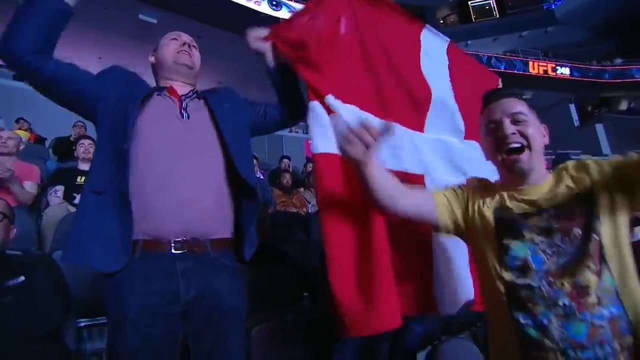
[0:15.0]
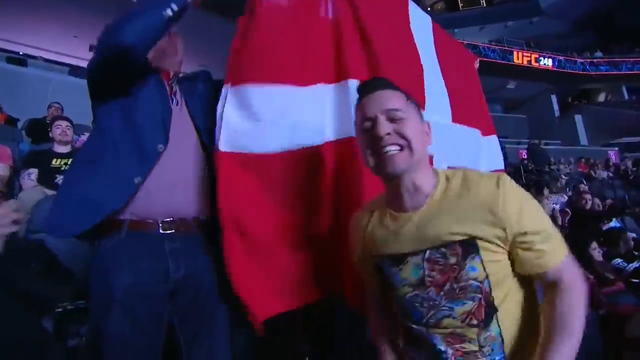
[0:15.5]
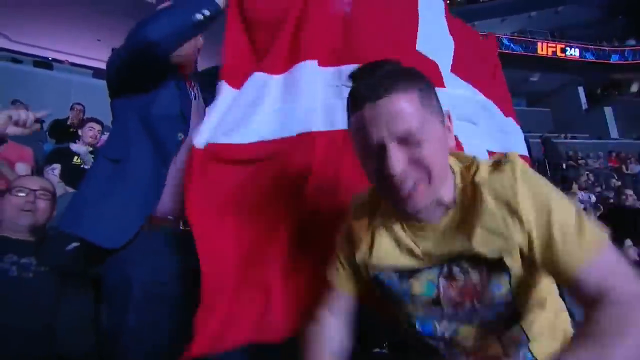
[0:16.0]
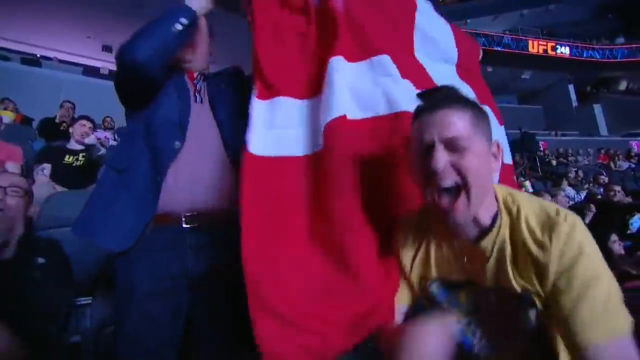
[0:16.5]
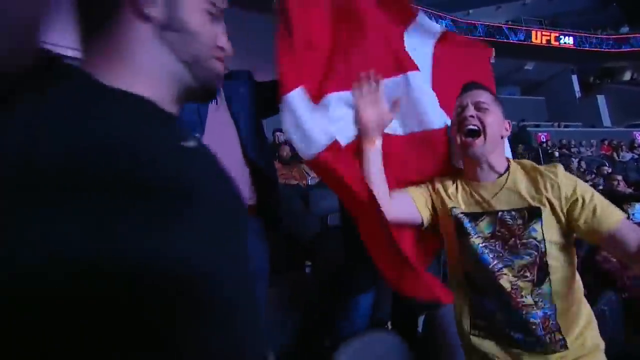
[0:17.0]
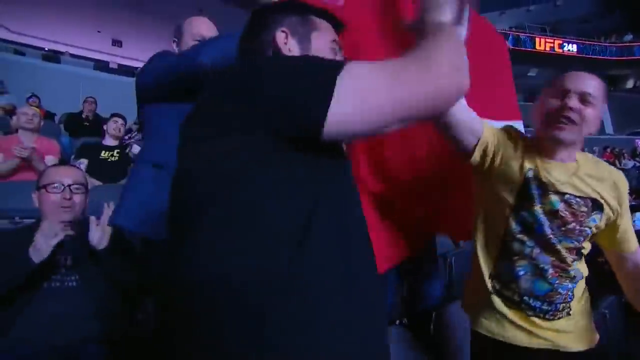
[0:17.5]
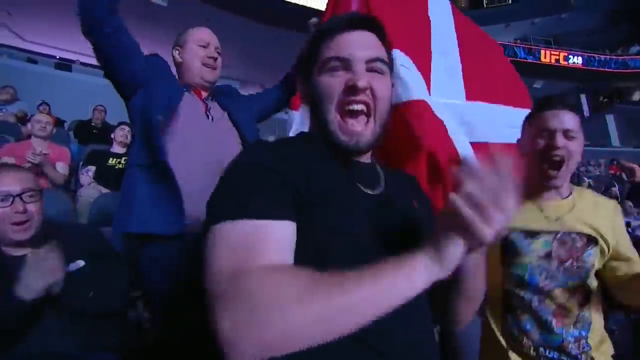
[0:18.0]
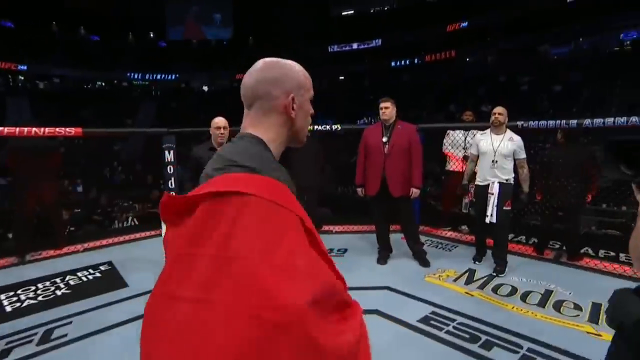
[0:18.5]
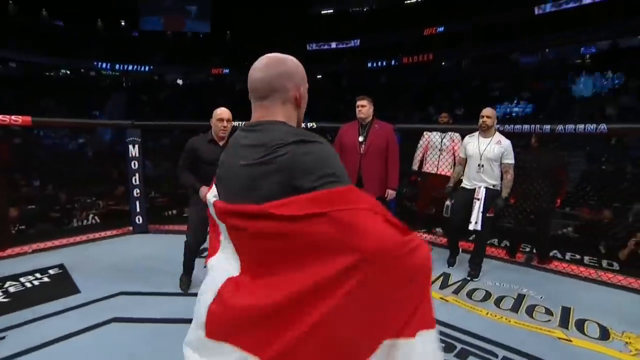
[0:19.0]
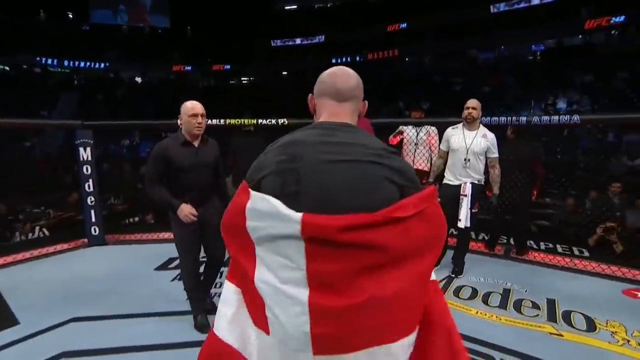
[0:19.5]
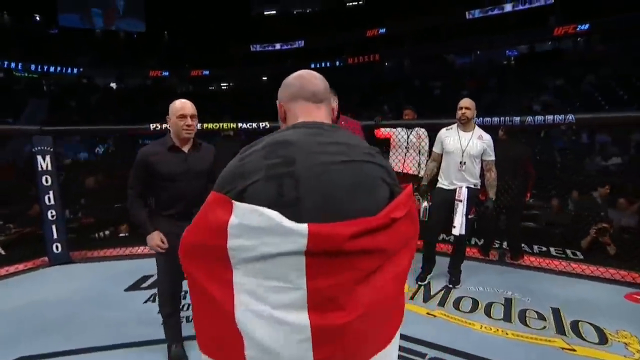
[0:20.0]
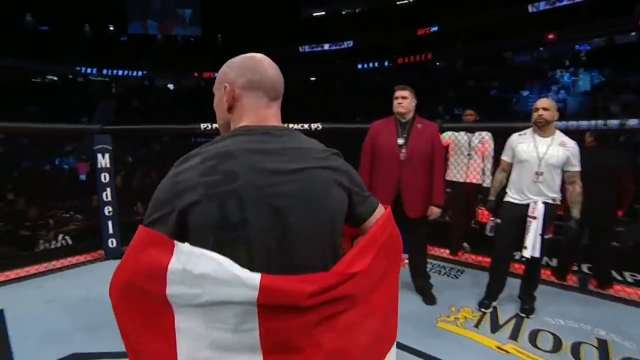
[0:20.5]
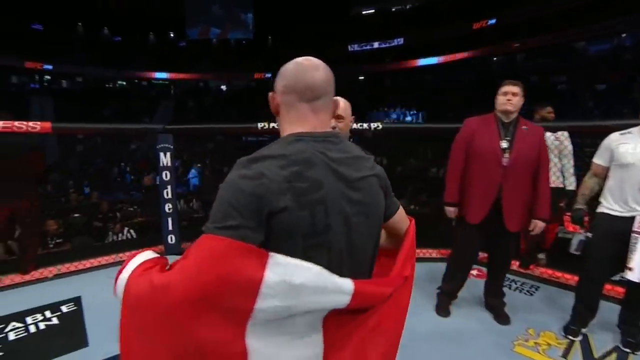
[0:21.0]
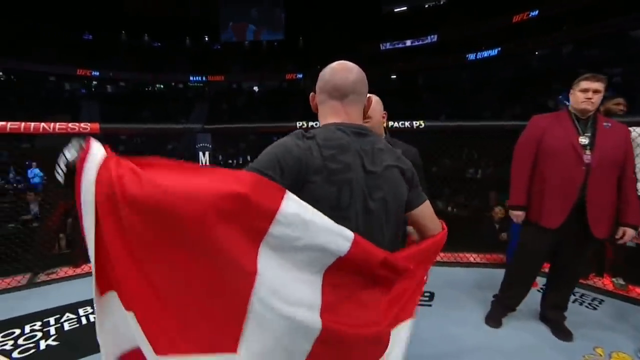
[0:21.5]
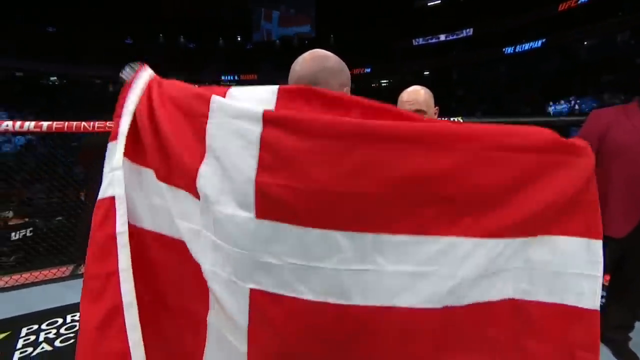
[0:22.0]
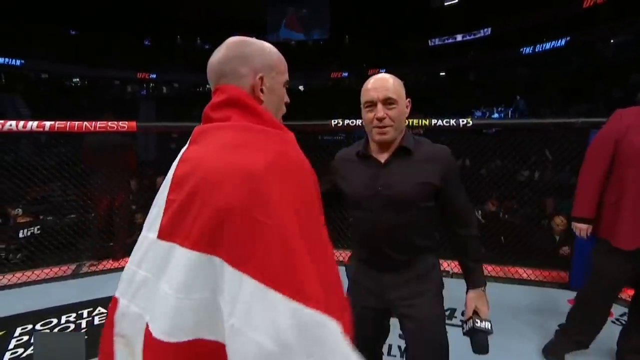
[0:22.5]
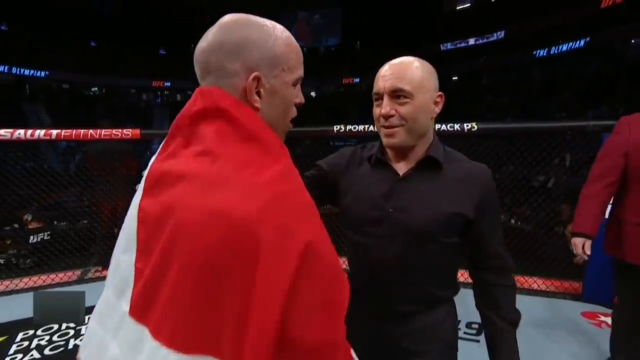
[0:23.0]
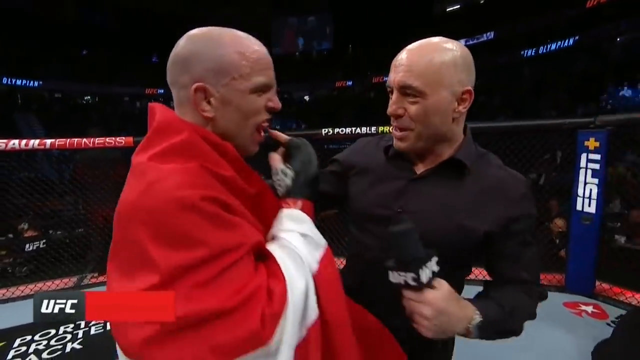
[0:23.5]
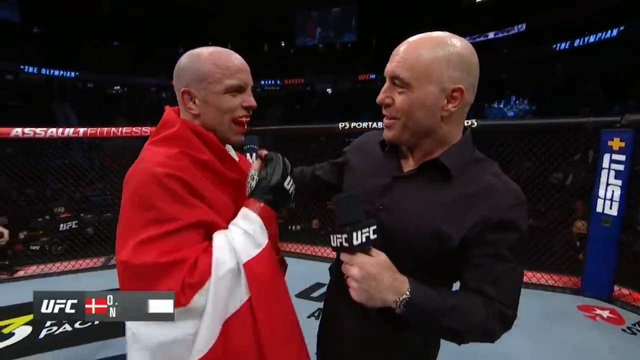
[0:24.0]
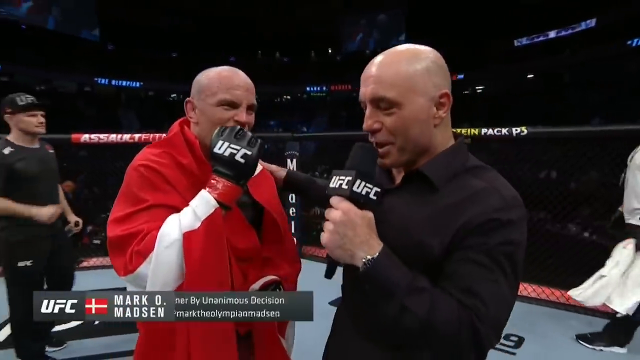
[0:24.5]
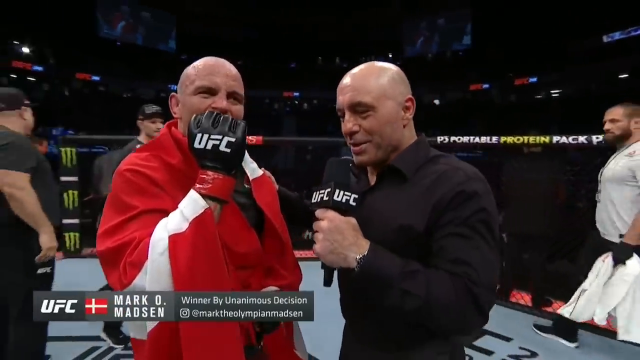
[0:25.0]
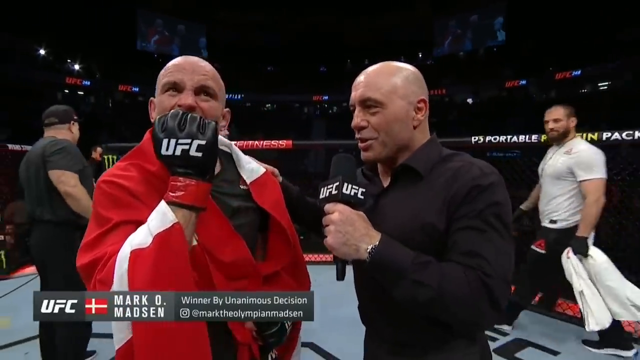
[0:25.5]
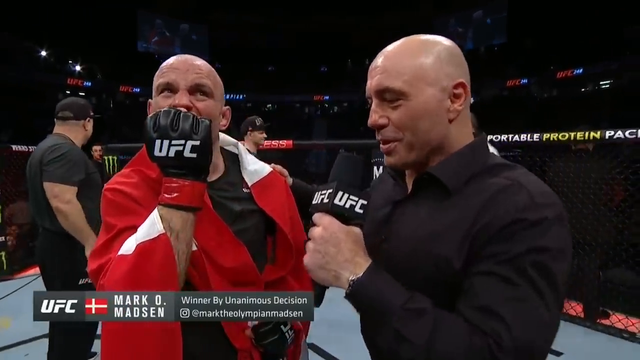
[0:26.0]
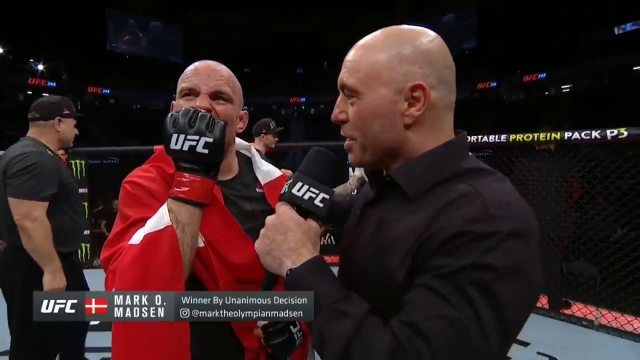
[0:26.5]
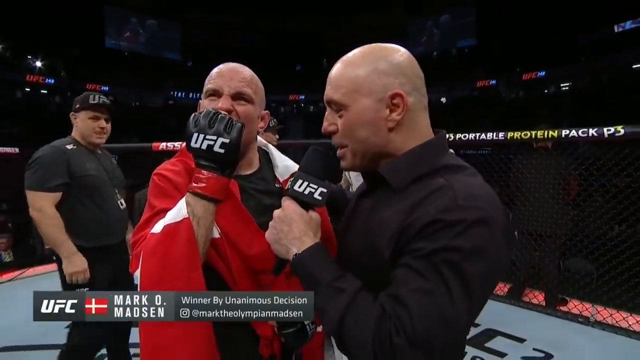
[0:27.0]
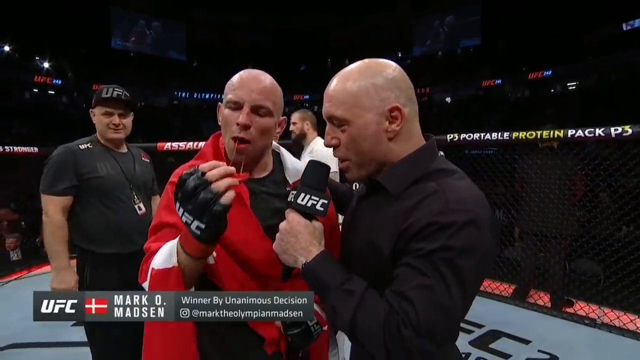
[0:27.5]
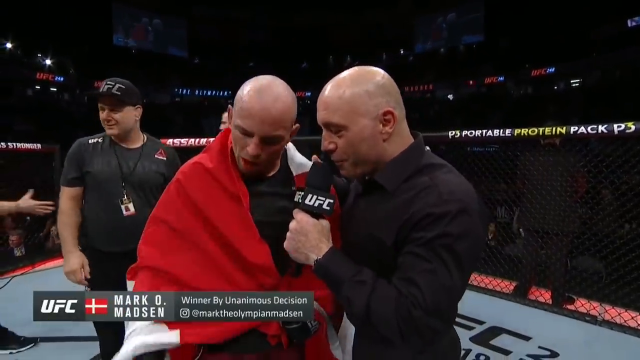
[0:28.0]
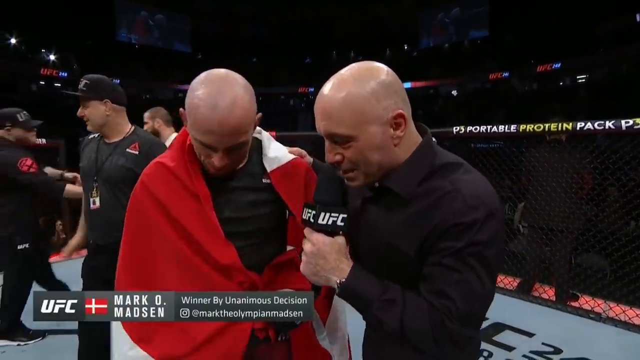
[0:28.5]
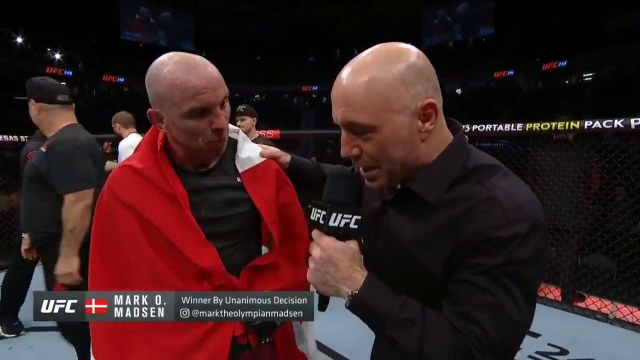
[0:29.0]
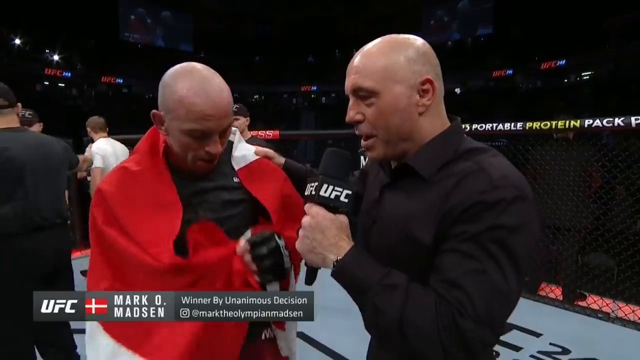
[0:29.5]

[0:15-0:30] A shot shows the crowd right after the decision, very happy and waving the same flag as the fighter, who is identified as Mark Madsen. Madsen still has the flag draped around his shoulders. A commentator who looks like Joe Rogan, though this is uncertain, approaches Madsen. Both men are bald. The commentator wears a black shirt and black pants and holds a microphone in his left hand. Madsen takes his mouthpiece out of his mouth; he is still wearing his gloves, which say "UFC" on them. A UFC logo watermark is in the bottom right corner. Mark Madsen wins by unanimous decision, and the crowd is happy. Rogan says something to Madsen, who looks at him and starts talking into the microphone.